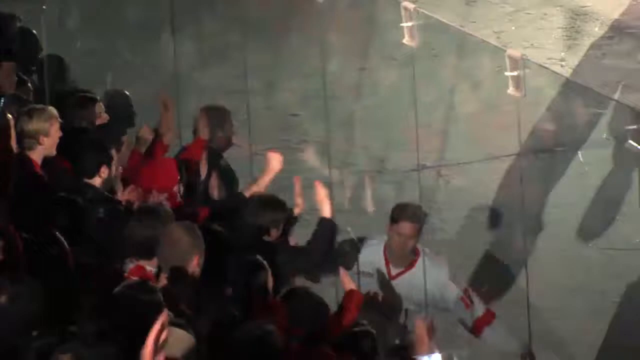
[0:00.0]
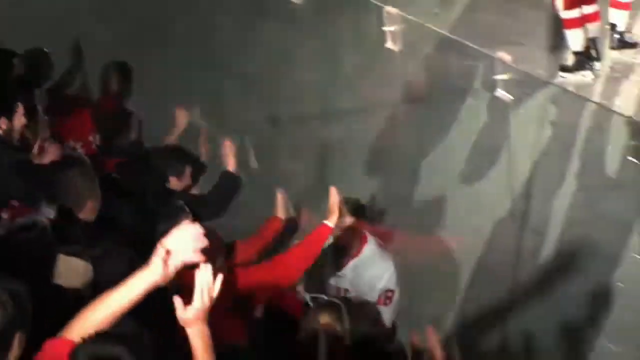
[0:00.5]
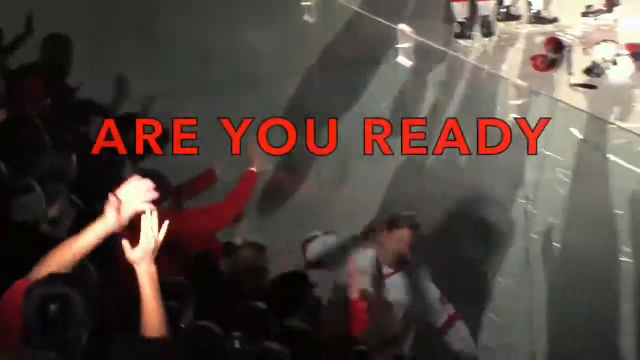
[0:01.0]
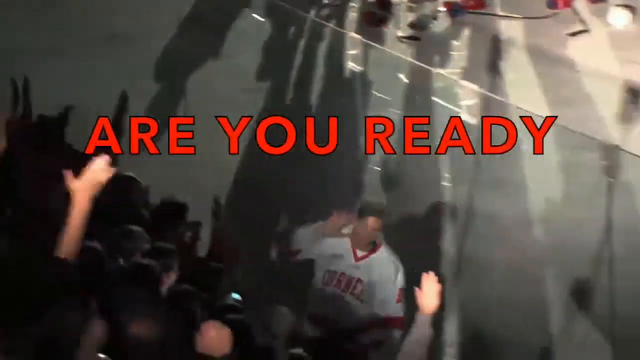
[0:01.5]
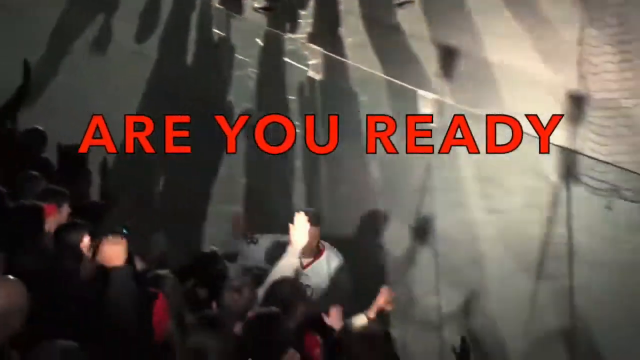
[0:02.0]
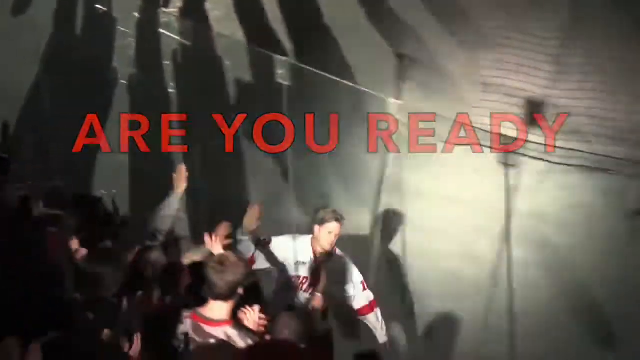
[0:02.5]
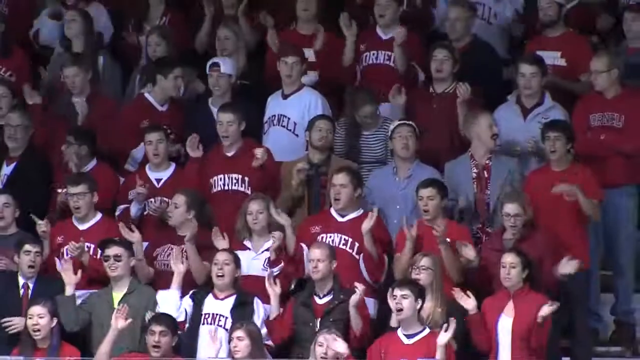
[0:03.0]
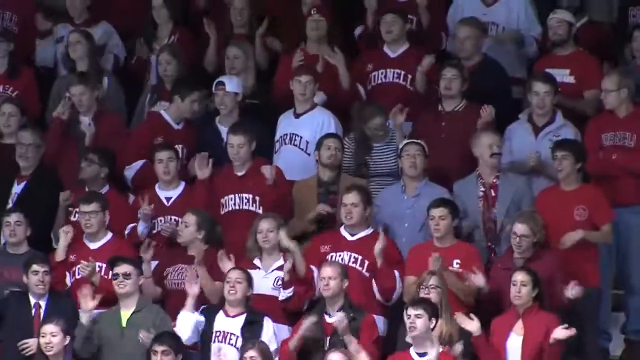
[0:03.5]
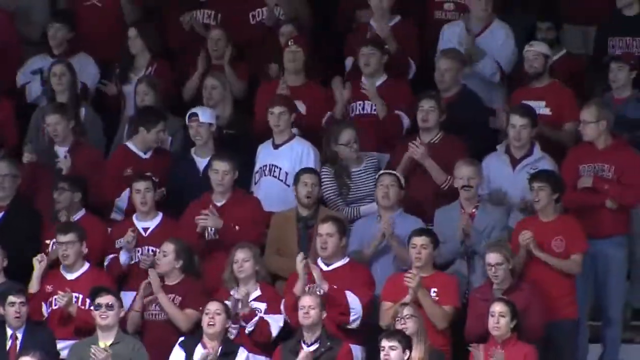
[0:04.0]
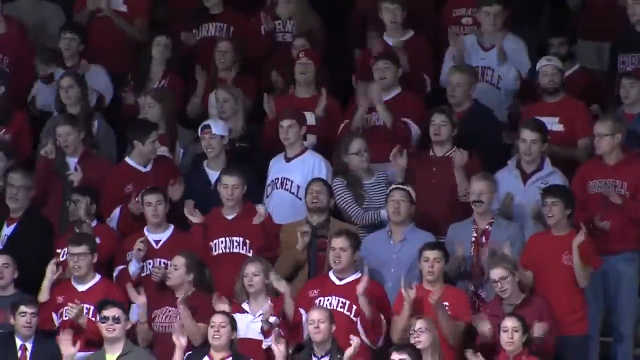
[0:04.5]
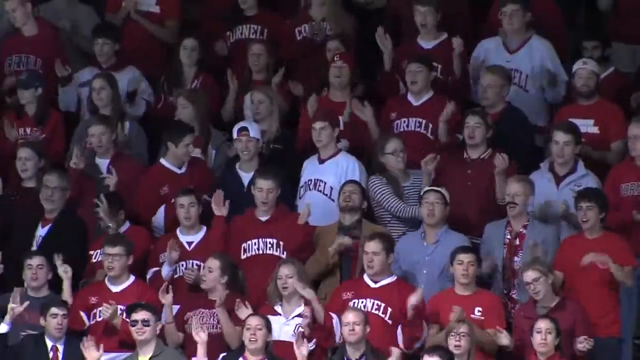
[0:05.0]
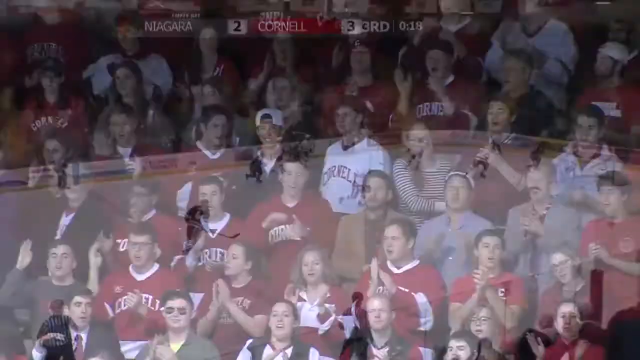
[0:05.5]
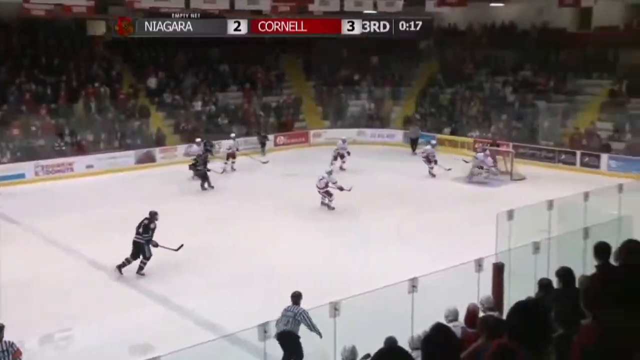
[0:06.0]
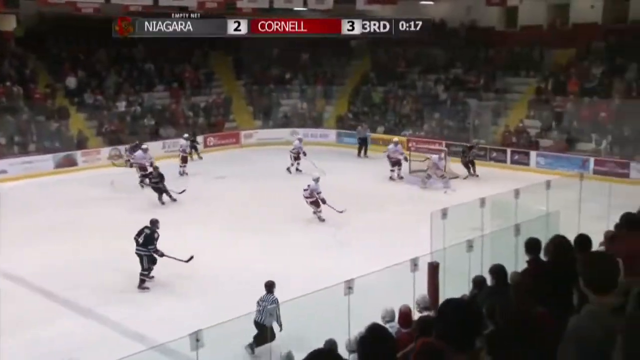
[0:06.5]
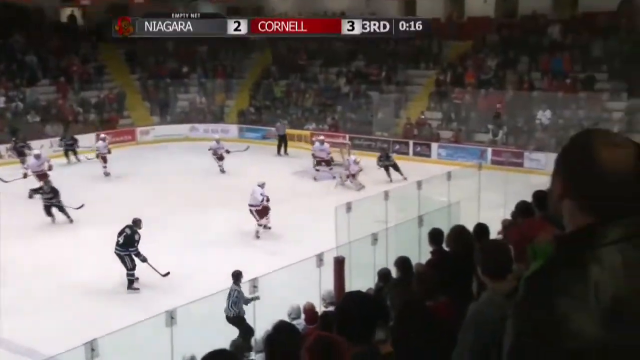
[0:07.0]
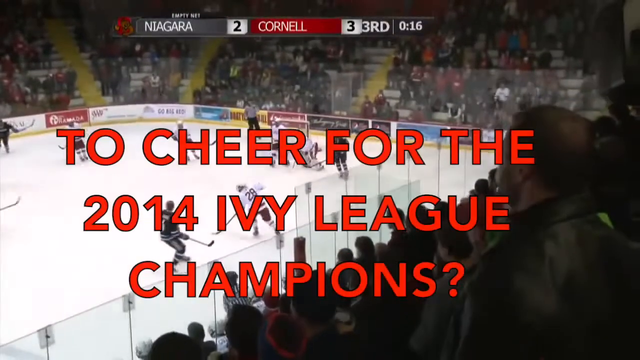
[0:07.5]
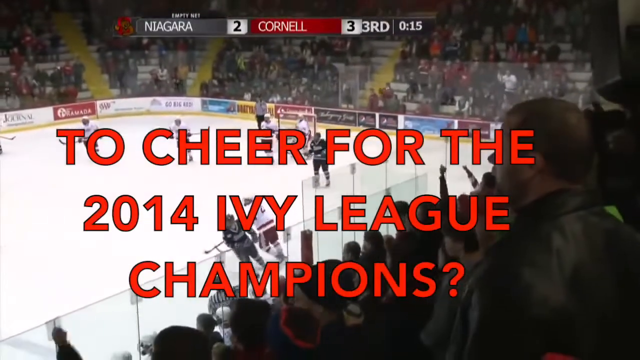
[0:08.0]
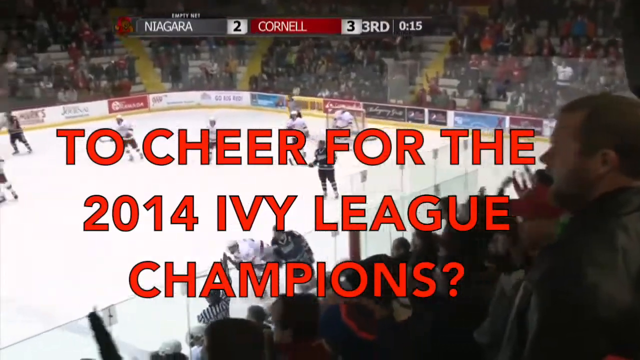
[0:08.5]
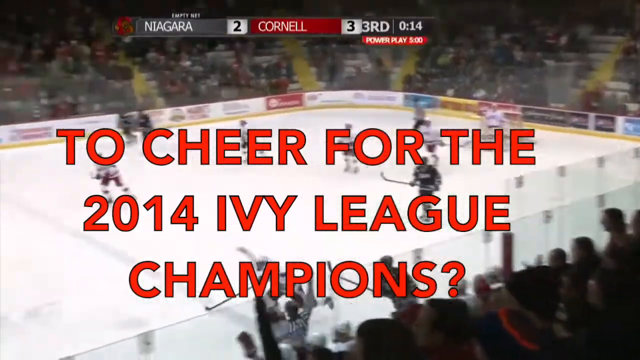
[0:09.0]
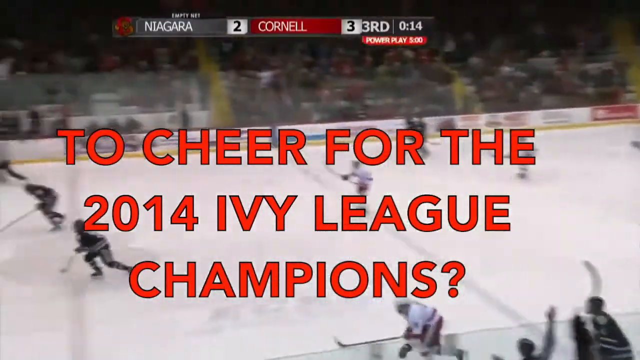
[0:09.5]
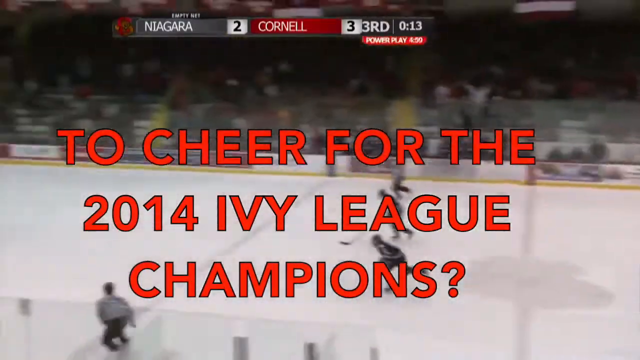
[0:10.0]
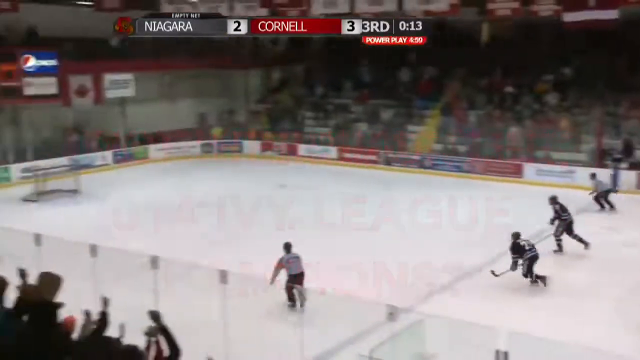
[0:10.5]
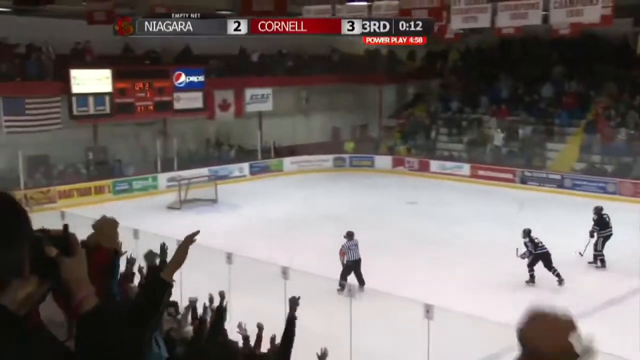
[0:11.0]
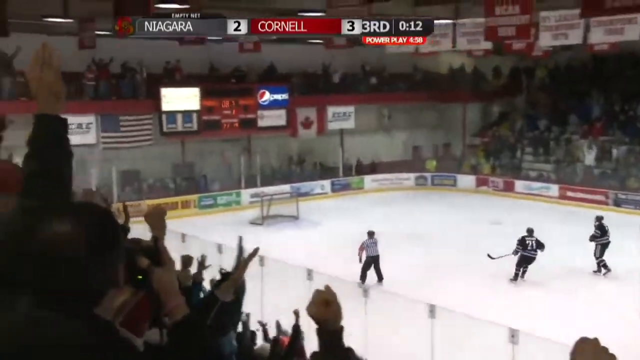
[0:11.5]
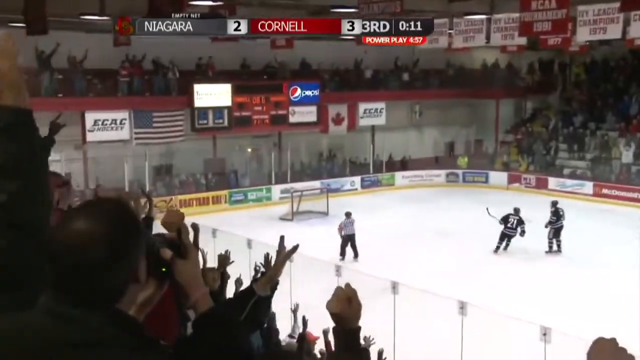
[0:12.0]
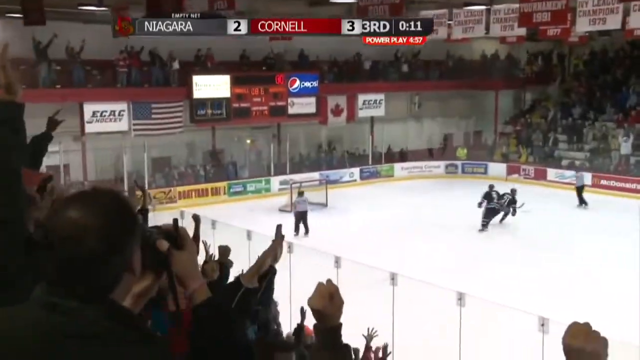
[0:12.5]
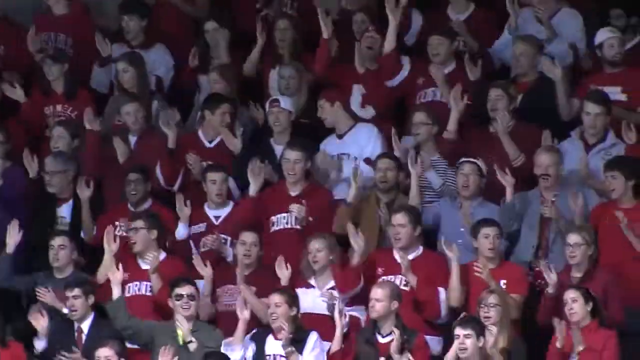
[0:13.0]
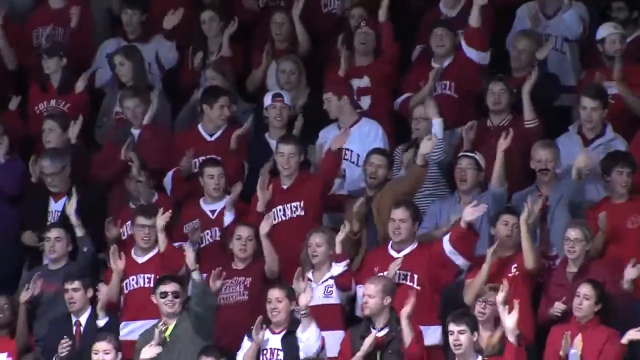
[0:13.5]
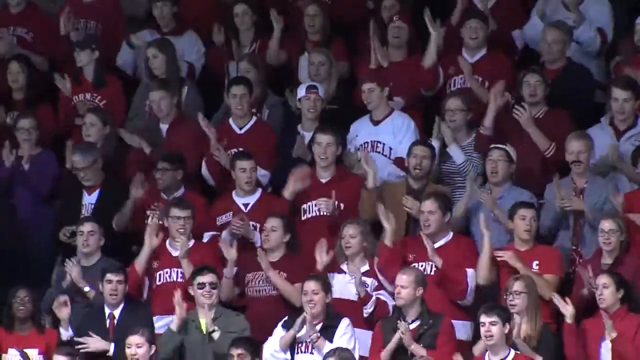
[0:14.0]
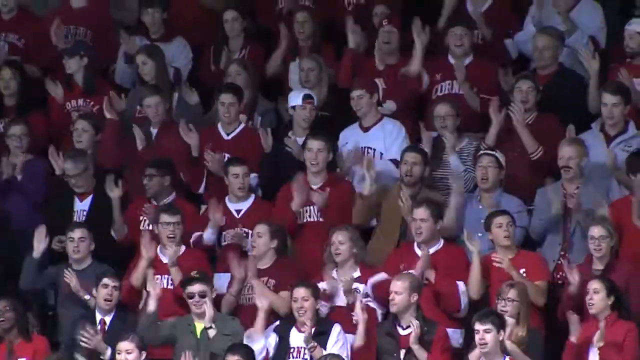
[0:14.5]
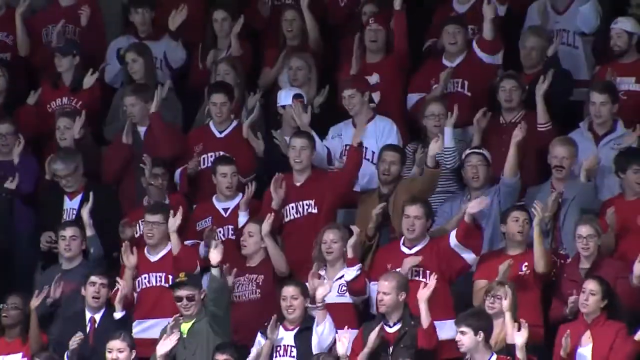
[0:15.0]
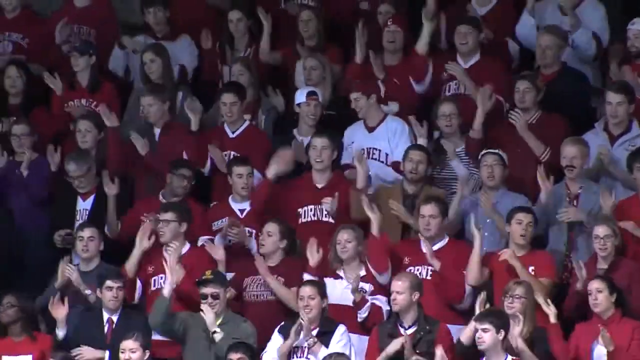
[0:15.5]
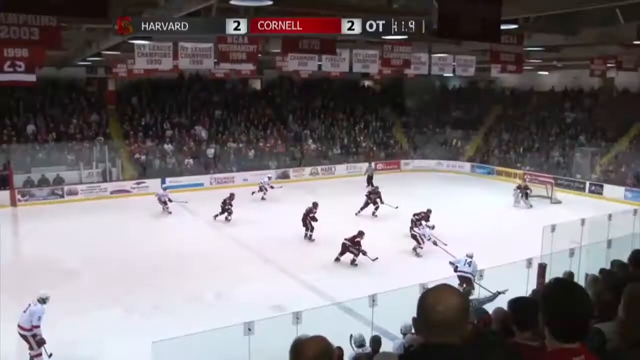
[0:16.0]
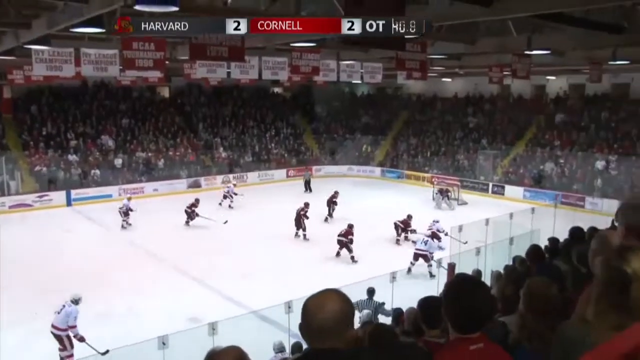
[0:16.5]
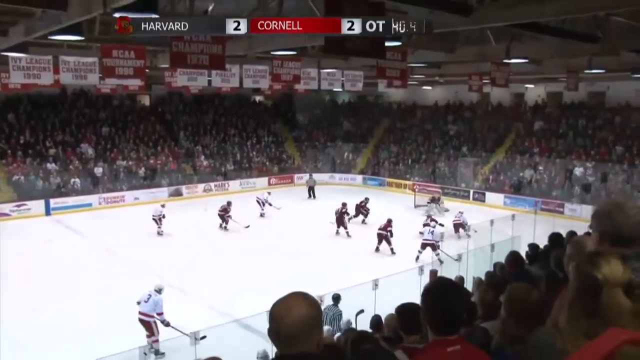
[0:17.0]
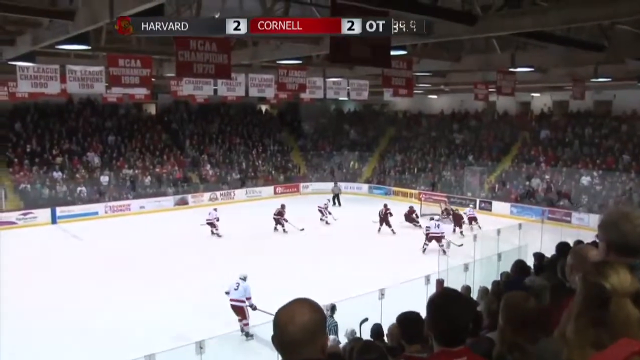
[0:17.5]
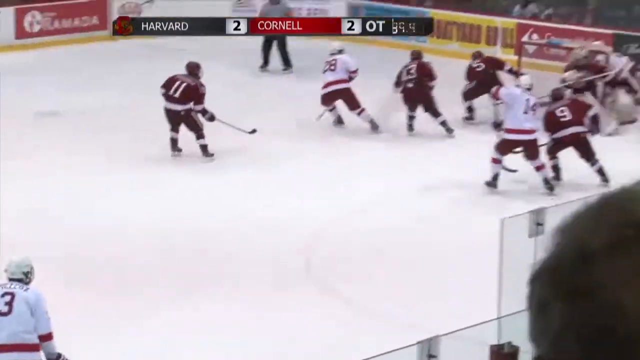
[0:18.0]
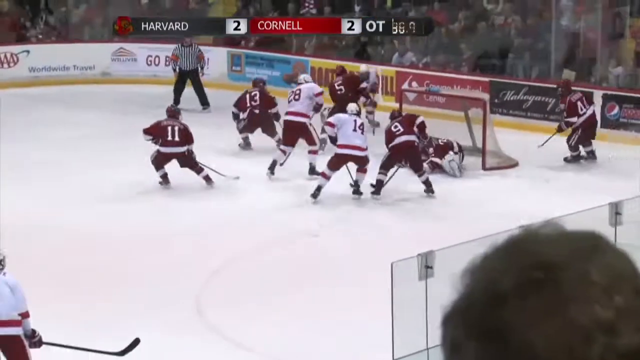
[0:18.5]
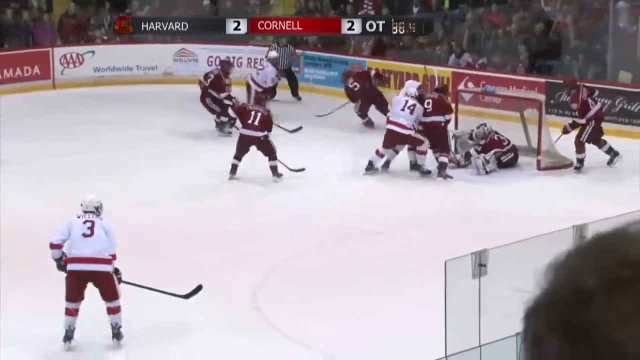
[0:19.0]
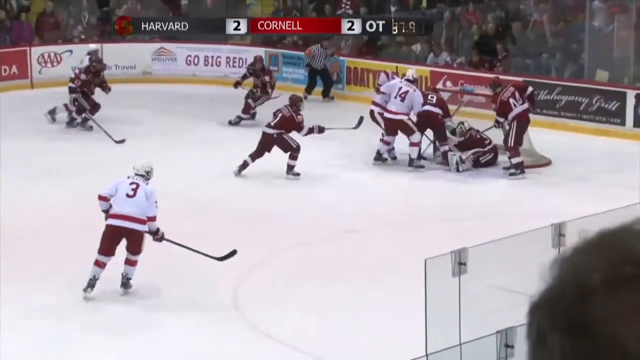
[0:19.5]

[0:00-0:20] A hockey game is shown. Text in red capital letters with a question mark reads "are you ready?" A player in a kind of white uniform appears, and the scene is kind of dark. People cheer in the stands wearing maroon shirts. On-screen text shows "Niagara" and "Cornell", with a score reading "Niagara 2, Cornell 3, 3rd." Cornell's color is maroon, so the home team looks like Cornell. A lot of hockey and many different things are happening. The hockey players' white jerseys are somewhat visible, and clear glass separates the audience from the players. Cornell students in the audience are kind of dancing, waving and cheering as fans, enjoying the game. At the very start there is a shadow, and a shadow appears behind the hockey player; it is kind of blackish and kind of large.